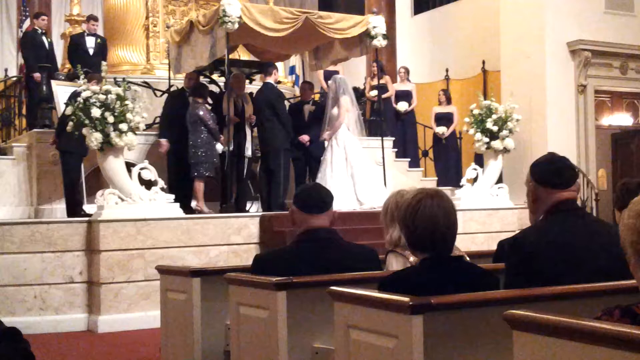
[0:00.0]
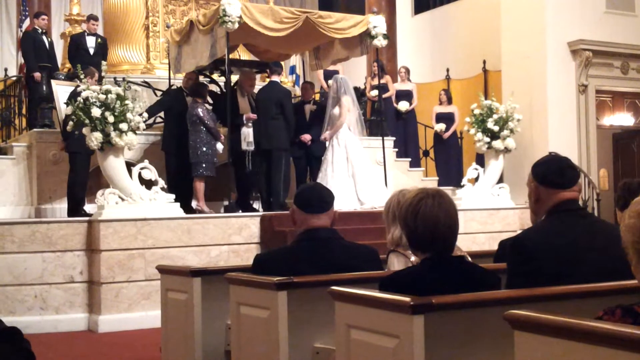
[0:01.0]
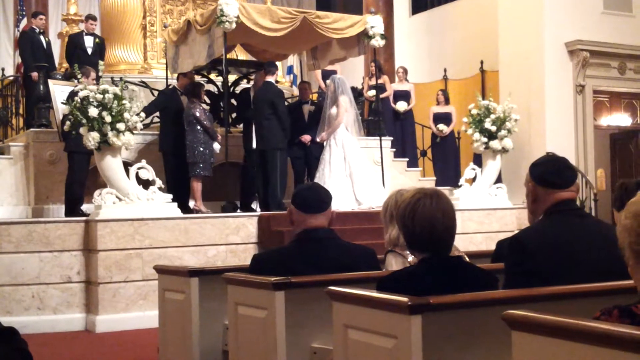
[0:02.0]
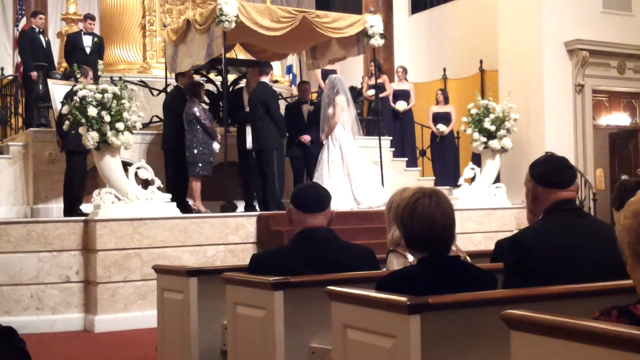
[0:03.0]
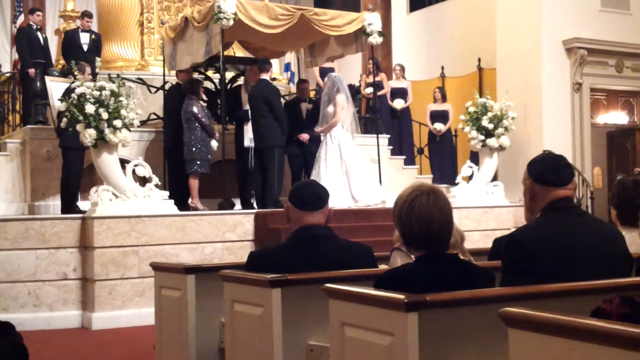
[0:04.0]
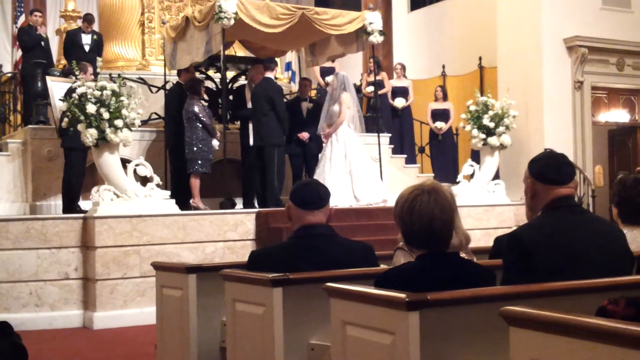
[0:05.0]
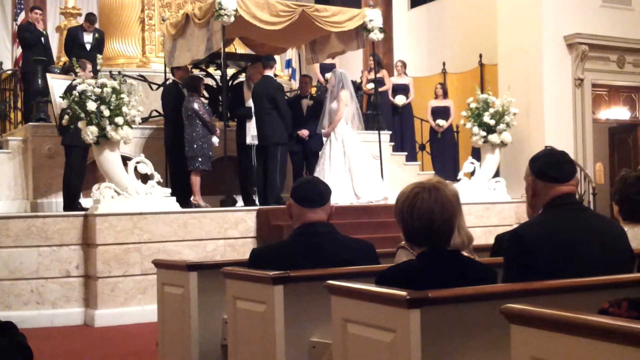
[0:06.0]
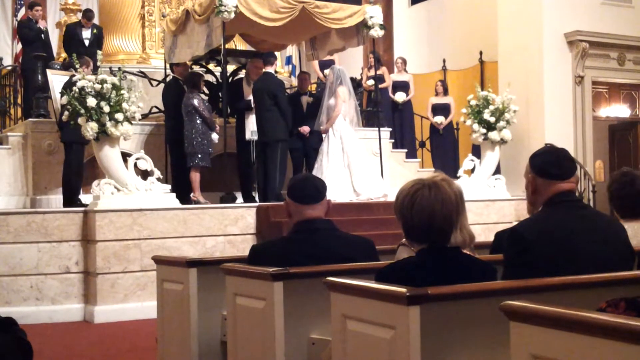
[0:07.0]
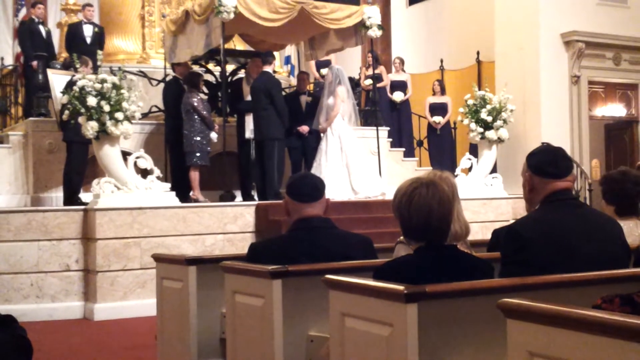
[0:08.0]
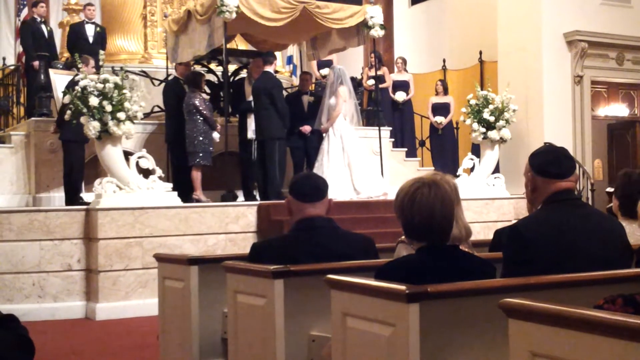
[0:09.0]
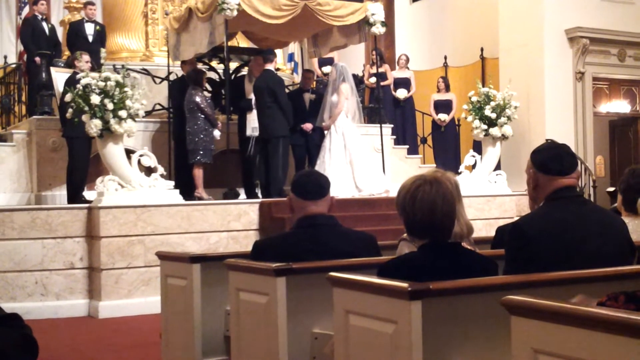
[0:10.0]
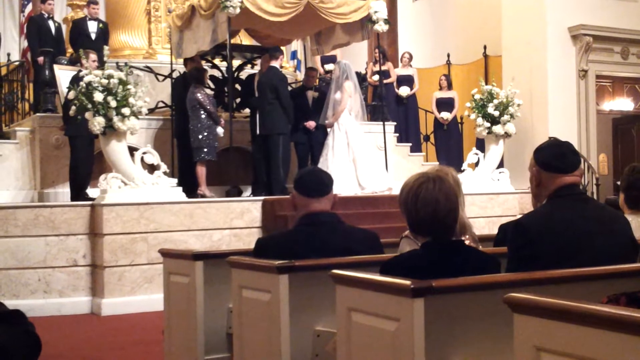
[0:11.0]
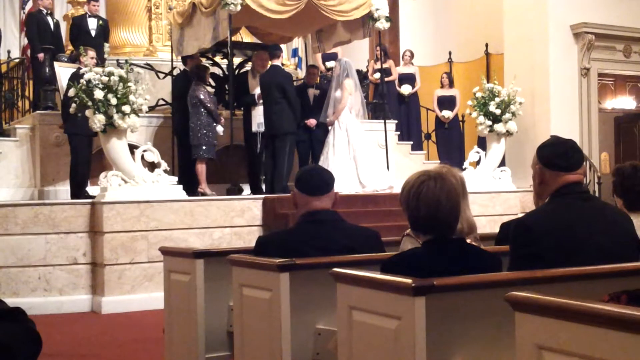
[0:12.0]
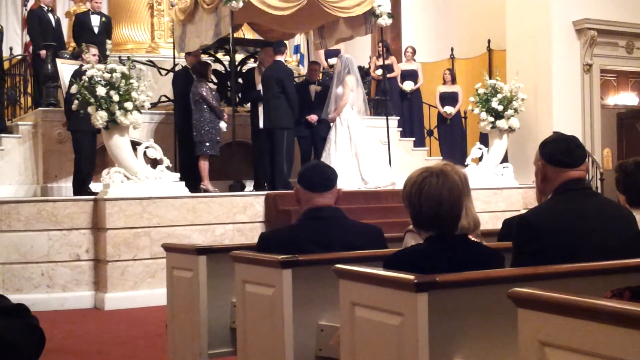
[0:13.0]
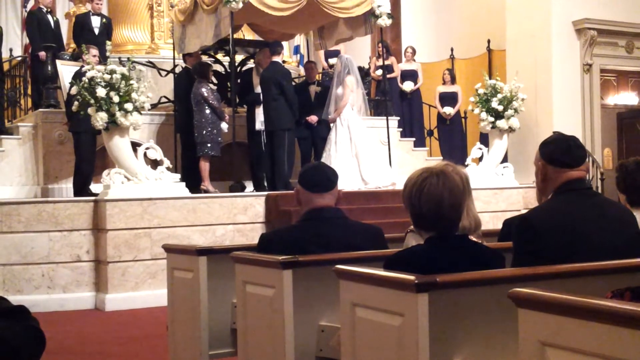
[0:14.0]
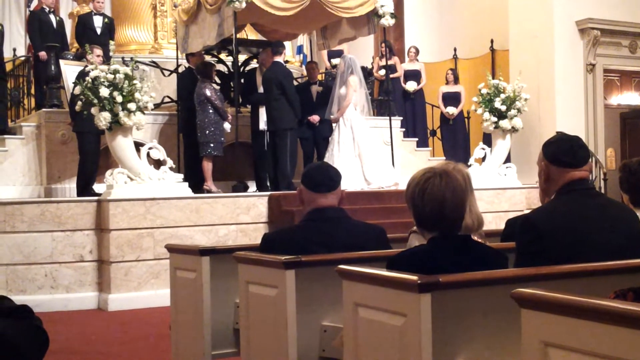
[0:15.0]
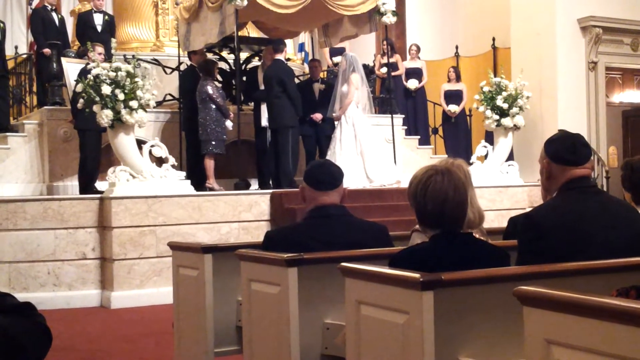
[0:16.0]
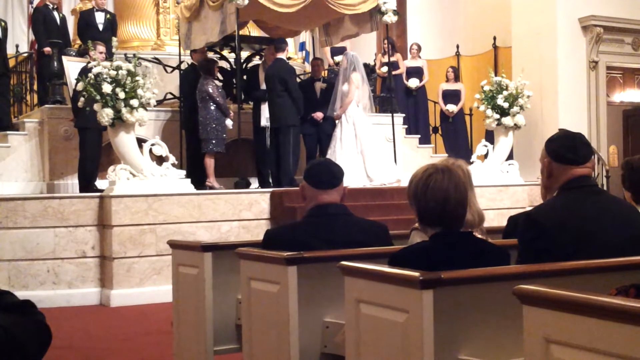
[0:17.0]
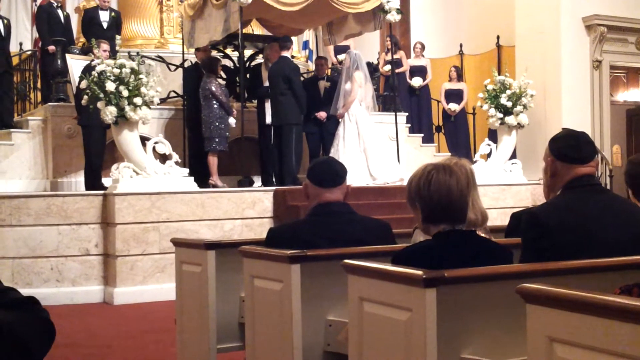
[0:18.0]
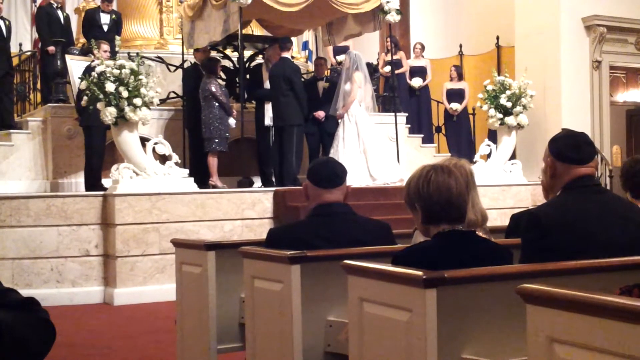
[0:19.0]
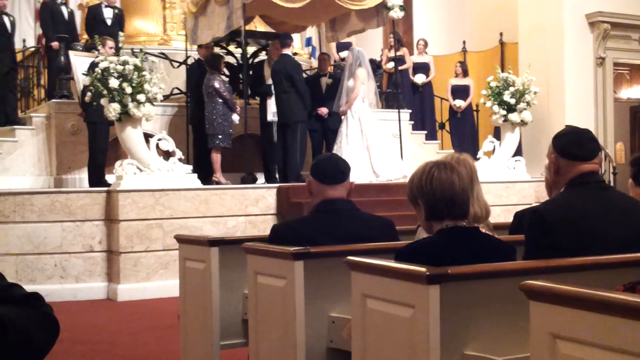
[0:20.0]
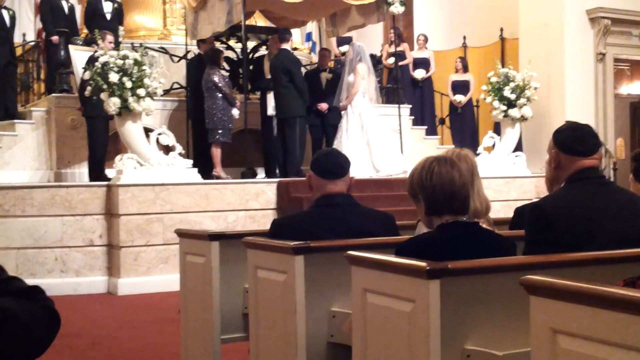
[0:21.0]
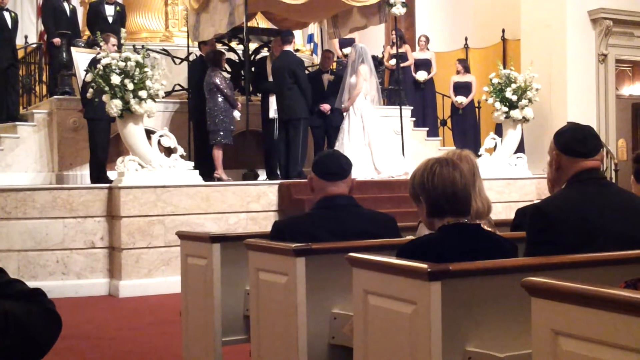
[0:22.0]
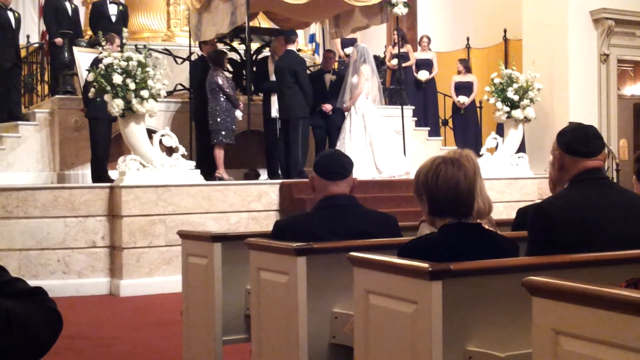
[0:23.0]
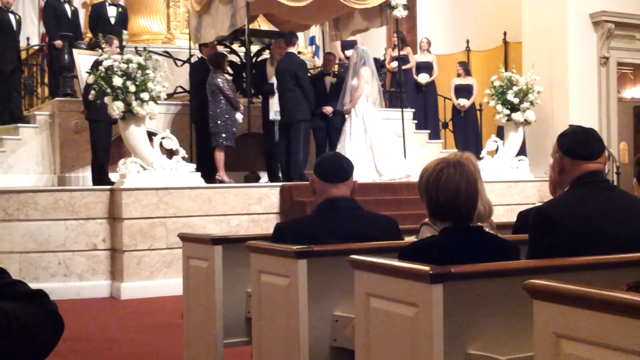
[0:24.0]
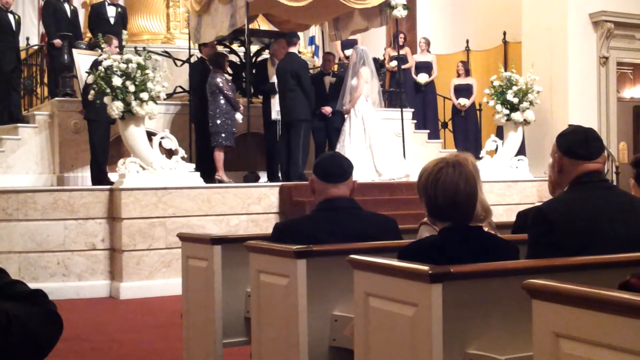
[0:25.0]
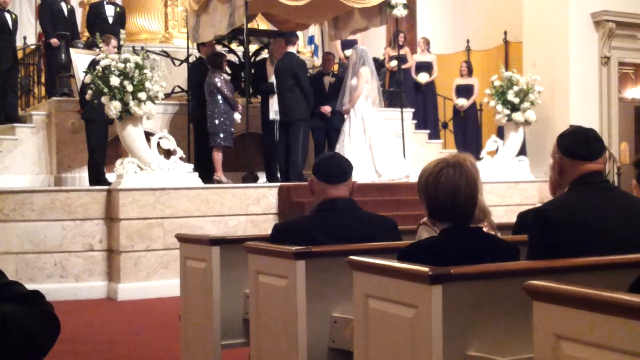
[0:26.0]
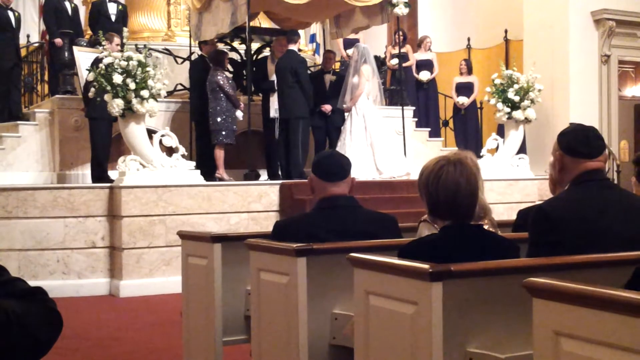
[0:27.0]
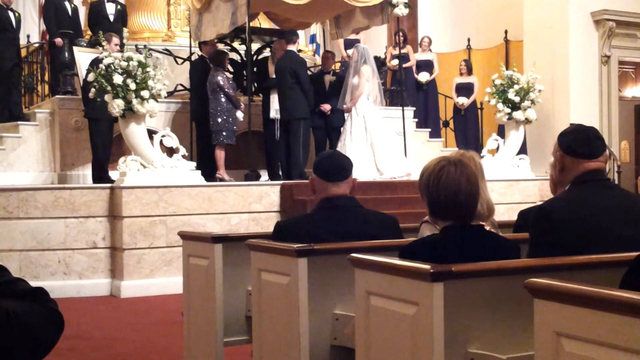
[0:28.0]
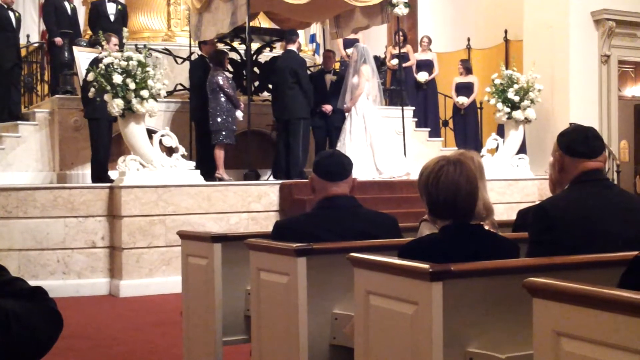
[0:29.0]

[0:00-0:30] A wedding ceremony takes place, apparently in a church. The camera view is from behind some pews, angled towards the altar, and a few people can be seen in the pews. The floor is red, likely carpeted, and the stairs up to the altar are likely stone, maybe marble. The altar has a canopy with gold fabric draped on the top. Under the canopy is a minister, with the bride and groom facing the minister and holding hands. The groom wears a traditional black tux, and the bride wears a traditional white dress with a veil. A few other people are under the canopy with them, presumably parents or other important people serving as witnesses. Off to the sides of the altar are various men and women, likely the bridesmaids and groomsmen, as well as two elegant vases with flowers.